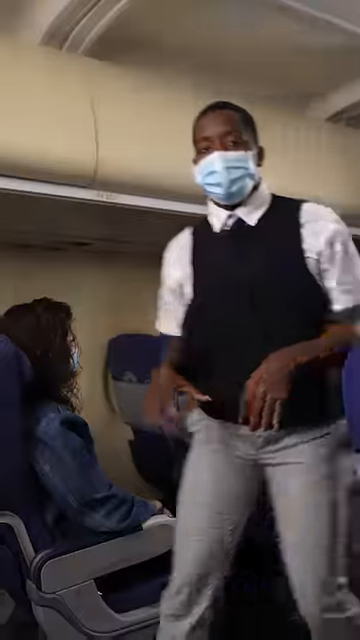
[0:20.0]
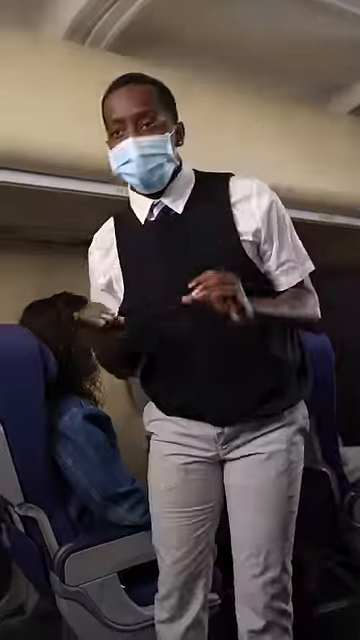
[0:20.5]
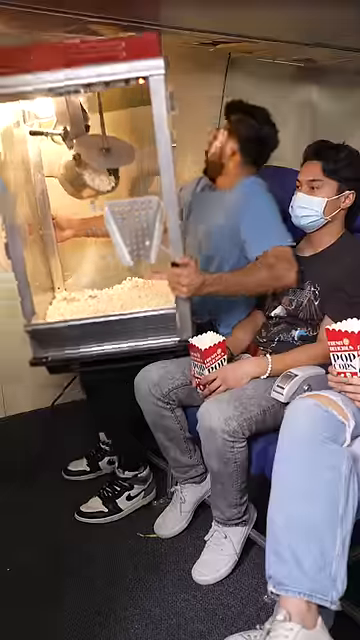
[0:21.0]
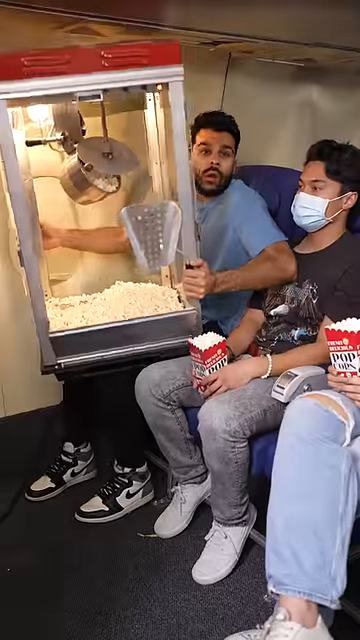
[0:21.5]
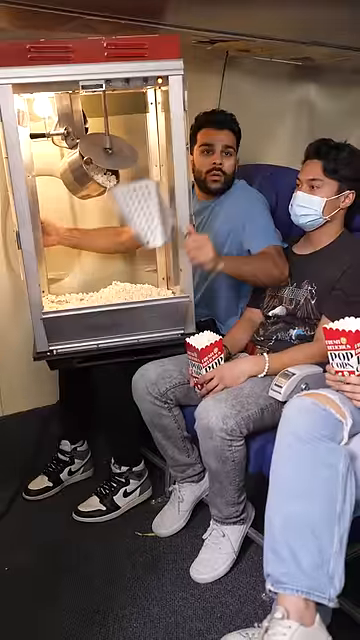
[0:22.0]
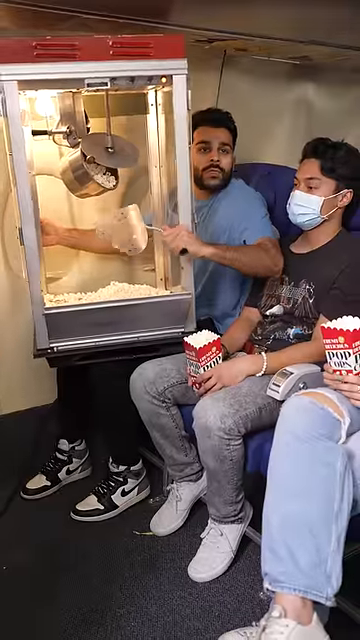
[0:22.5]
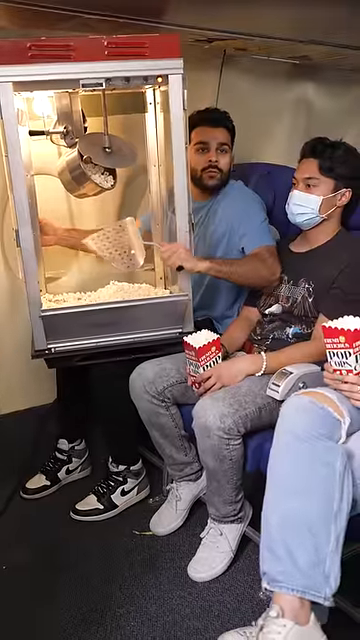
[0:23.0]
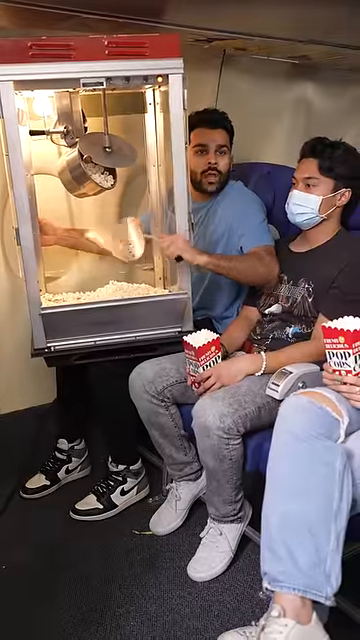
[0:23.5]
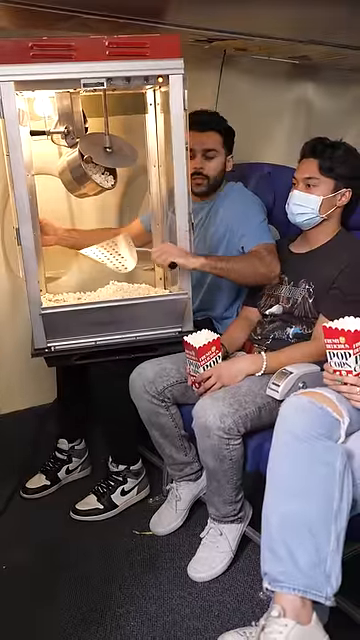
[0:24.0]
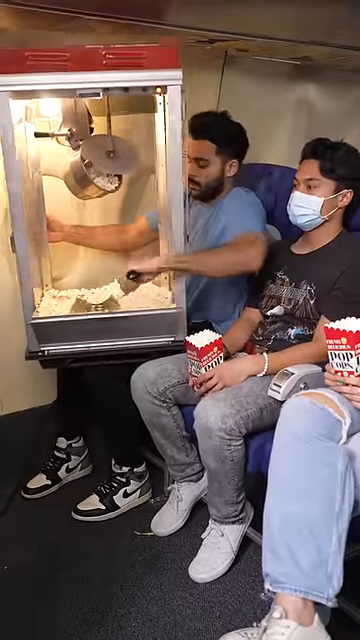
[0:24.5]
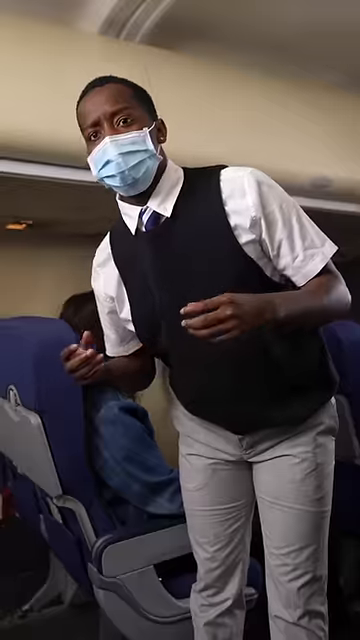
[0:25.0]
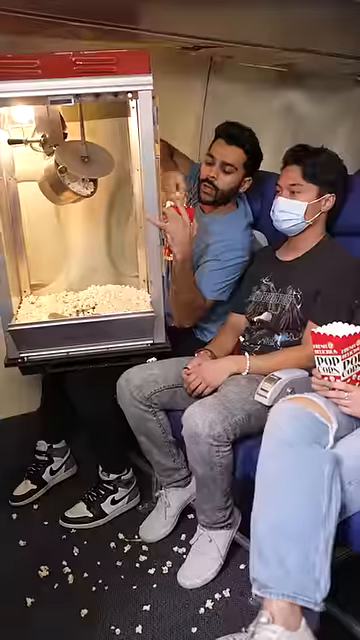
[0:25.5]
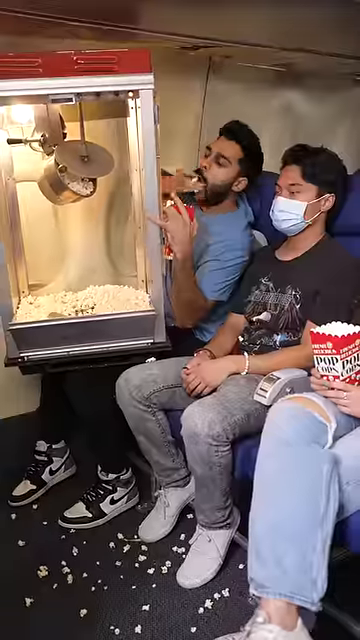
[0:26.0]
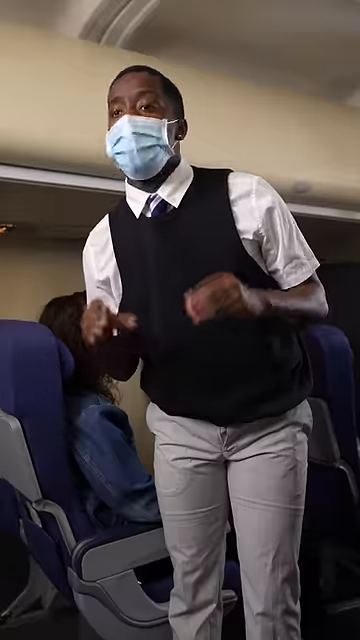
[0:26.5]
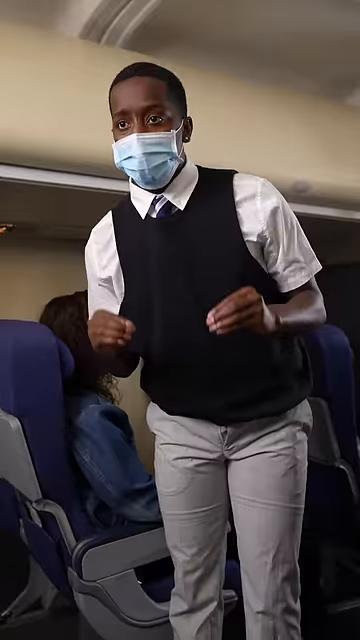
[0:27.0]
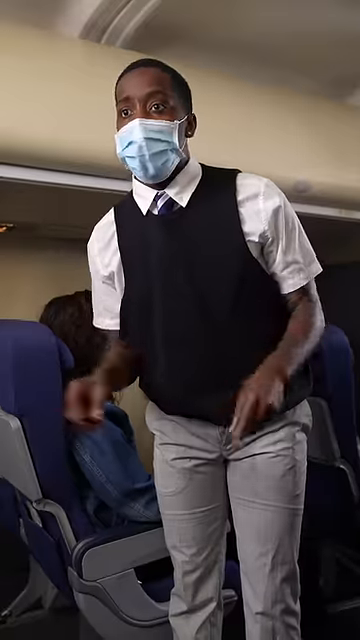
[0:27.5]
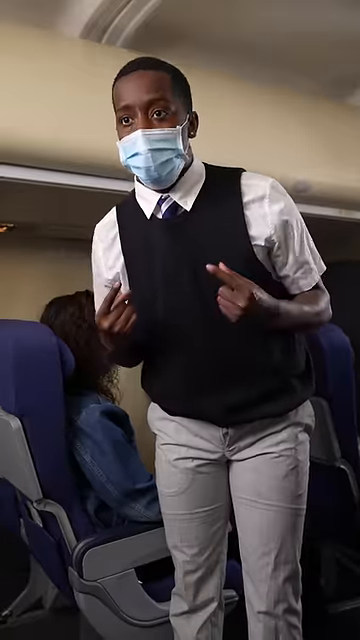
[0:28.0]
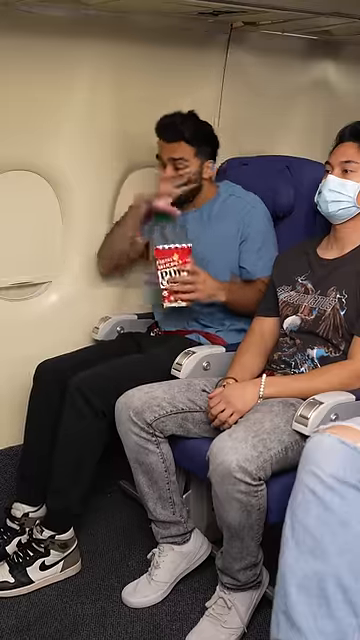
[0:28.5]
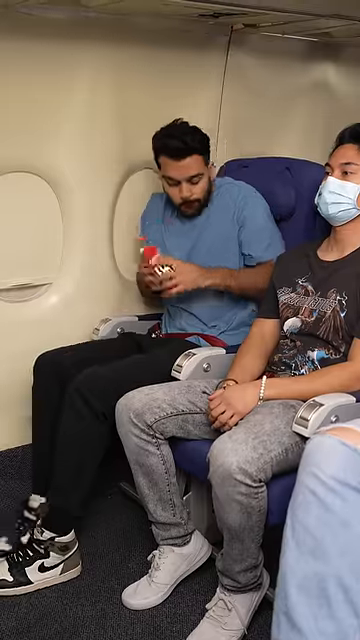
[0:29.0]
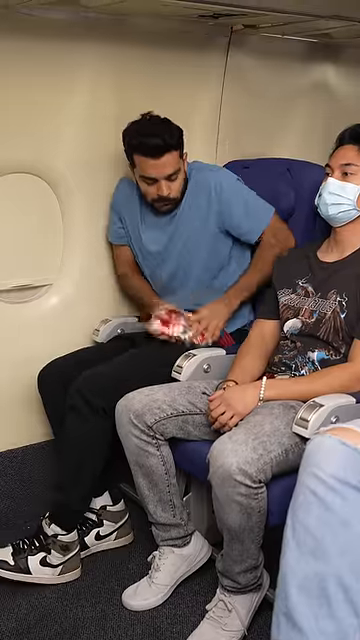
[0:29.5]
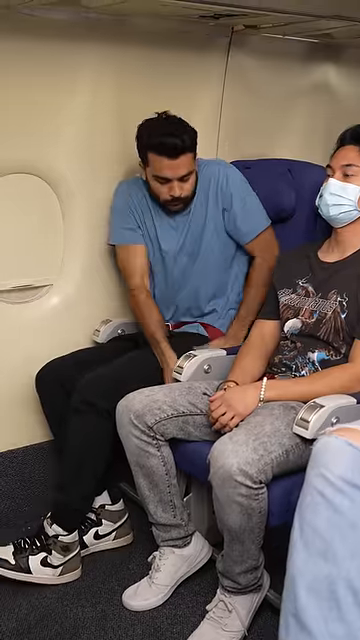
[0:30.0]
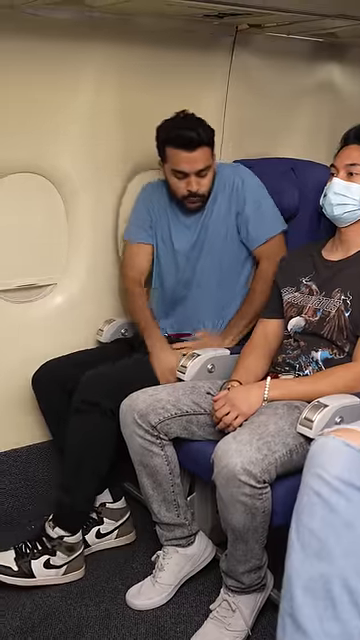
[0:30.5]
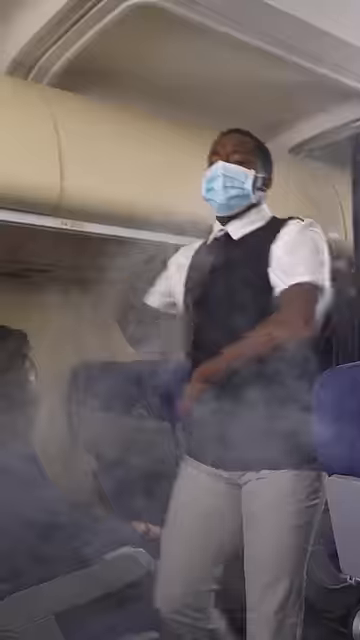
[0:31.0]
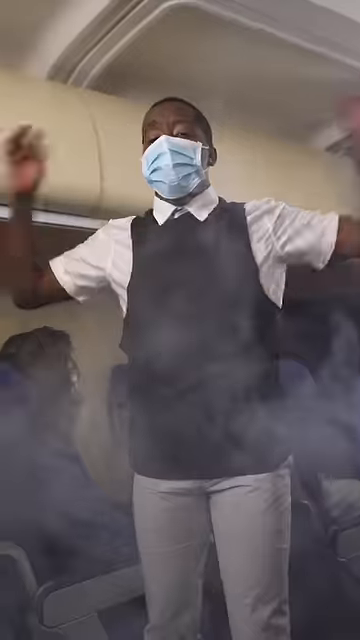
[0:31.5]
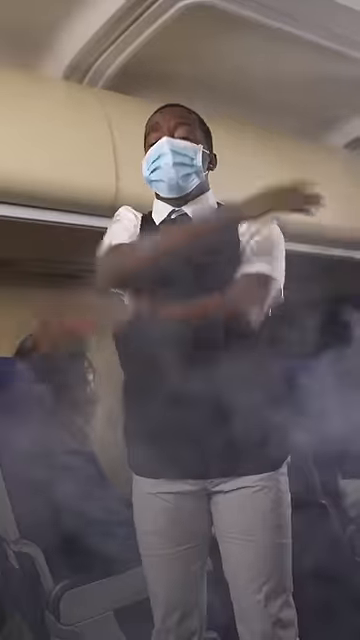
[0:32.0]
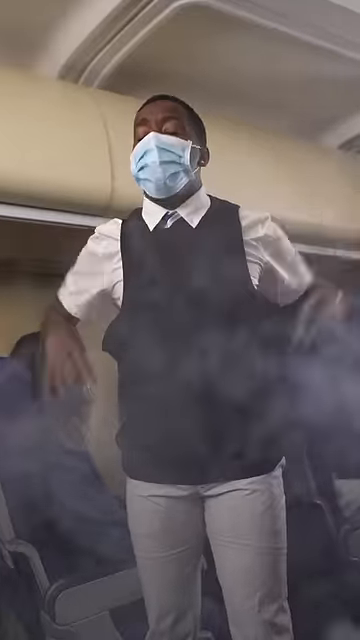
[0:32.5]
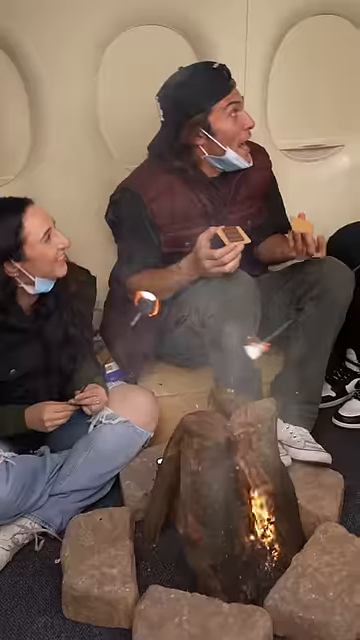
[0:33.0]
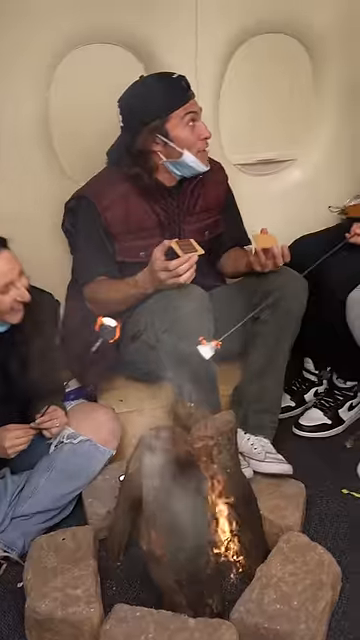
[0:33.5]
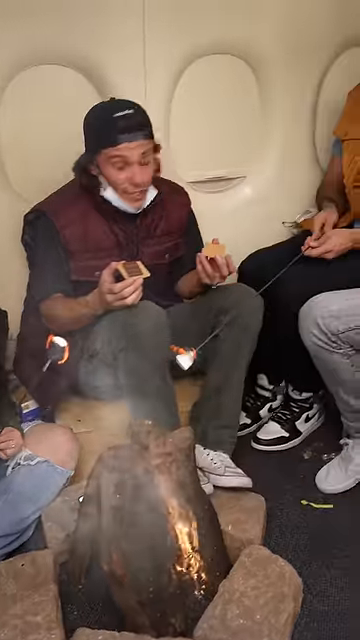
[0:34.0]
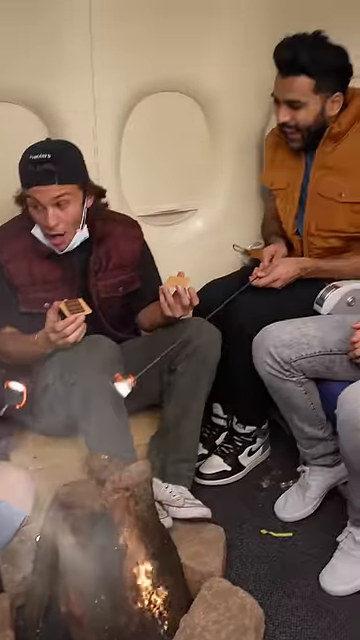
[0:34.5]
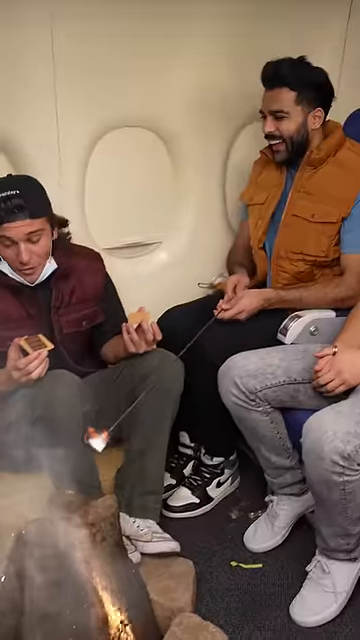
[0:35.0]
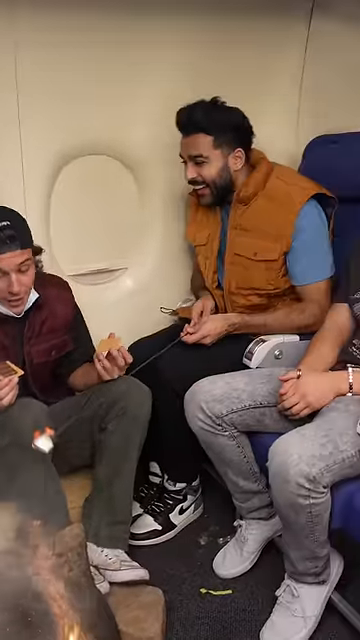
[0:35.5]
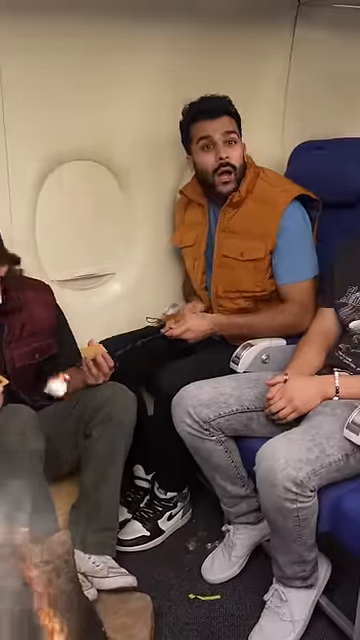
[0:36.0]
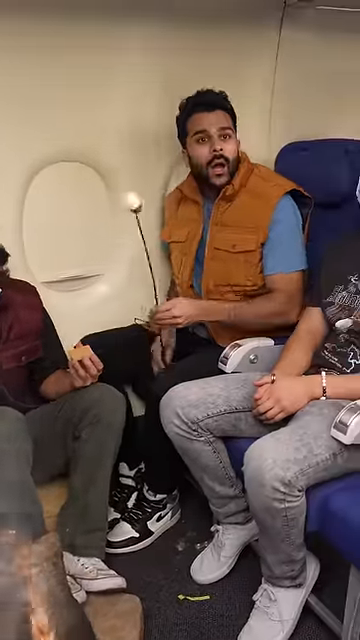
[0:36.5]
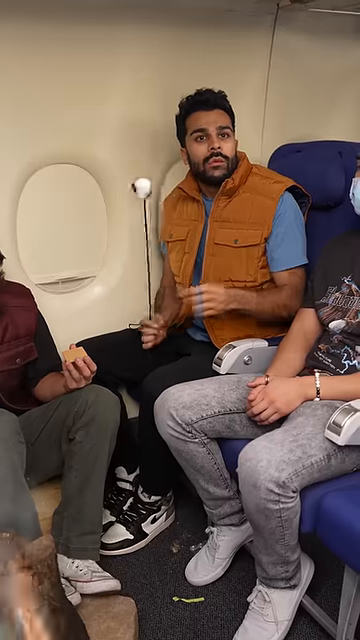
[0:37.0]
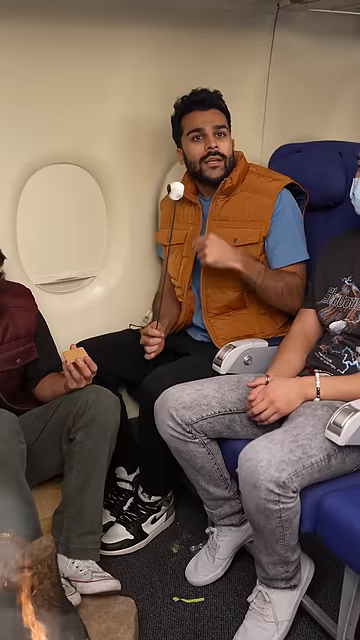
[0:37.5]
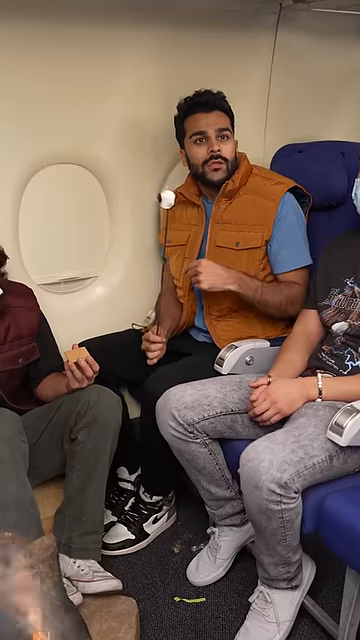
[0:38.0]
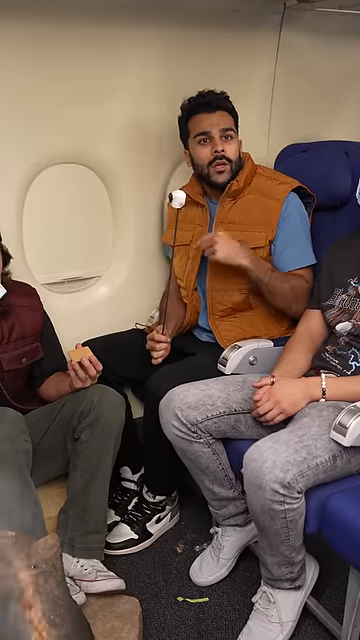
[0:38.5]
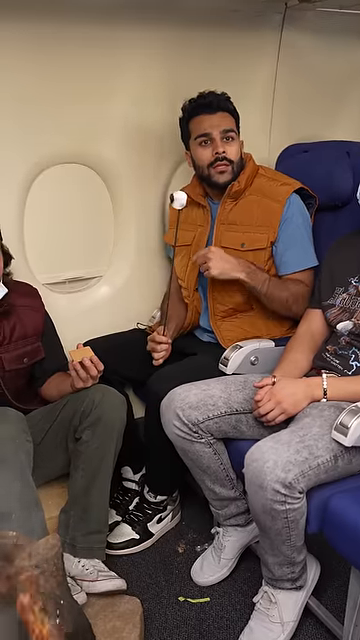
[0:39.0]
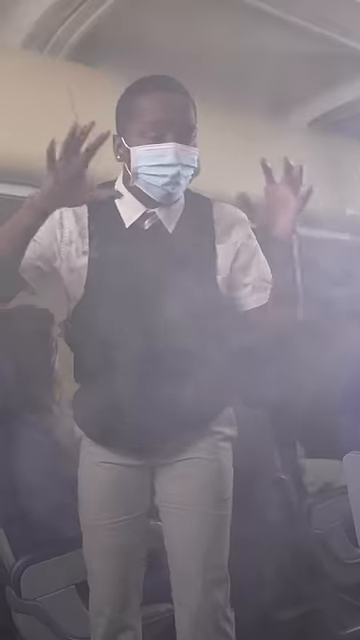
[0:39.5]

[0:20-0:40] The flight attendant, a young African American man in his 20s, returns in the same fashion, looking concerned. The passenger spins back around, shocked, holding a popcorn popper like a movie theater popper, full of popcorn. The person sitting next to him hasn't budged and is just sitting there, also wearing a mask. The passenger takes a handful of popcorn, throws it into his mouth and puts the popcorn popper back on the side of his seat. The flight attendant then returns, fanning away smoke, and the same passenger now has other passengers sitting around him, toasting marshmallows over a fire that looks like stones and fire. He has a marshmallow on the end of a stick, and they laugh and have a good time until the flight attendant comes back, fans the smoke away and gestures; his mouth cannot be seen because he still has the mask on.